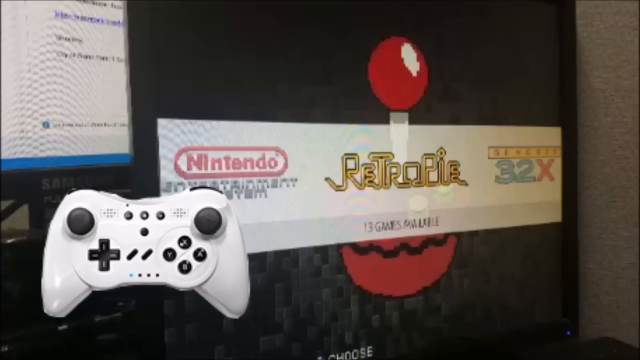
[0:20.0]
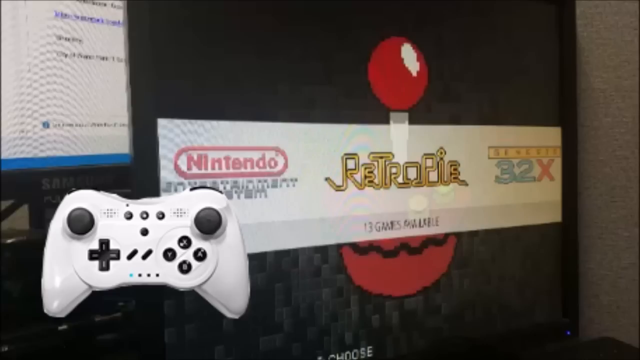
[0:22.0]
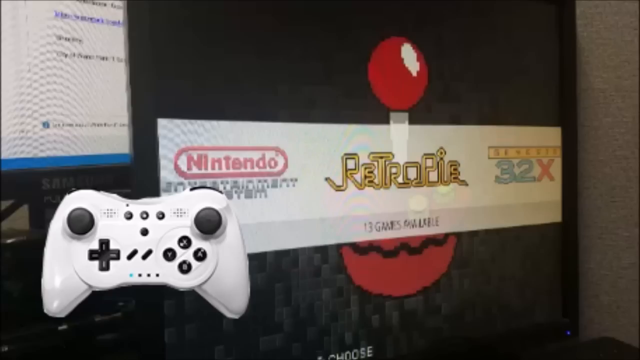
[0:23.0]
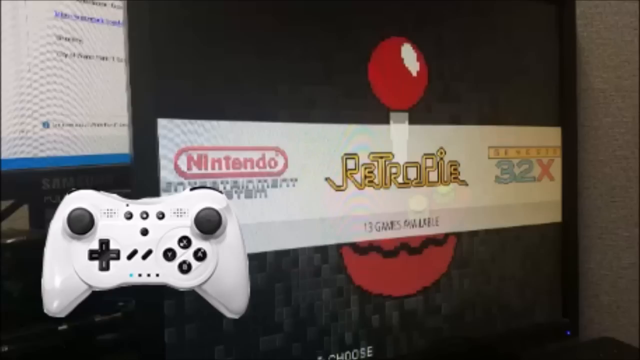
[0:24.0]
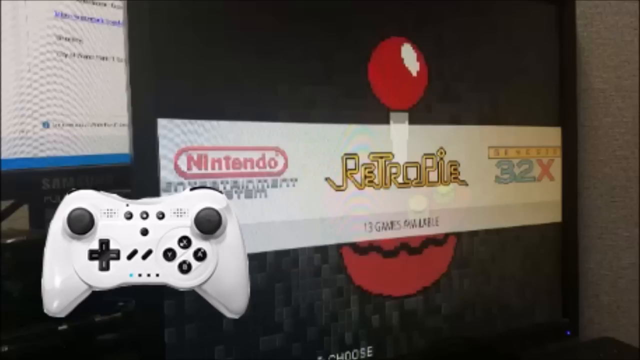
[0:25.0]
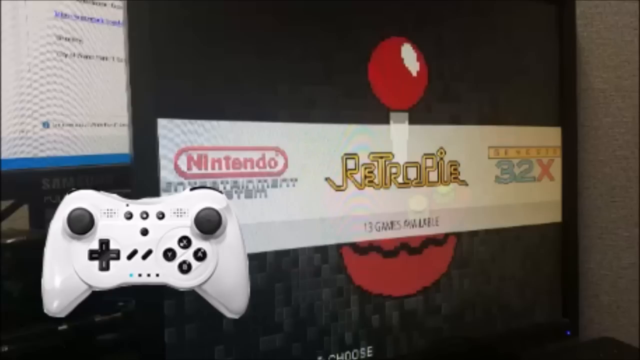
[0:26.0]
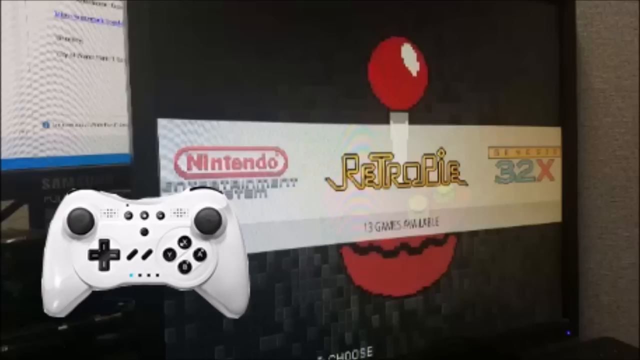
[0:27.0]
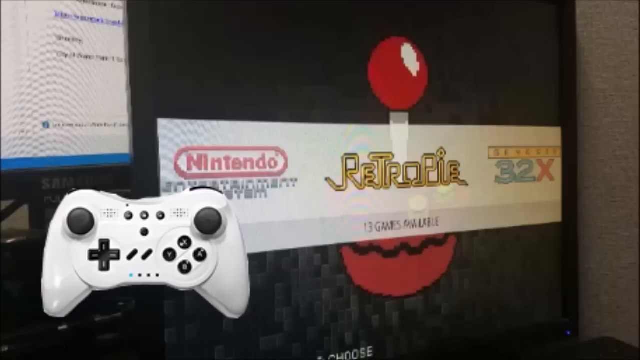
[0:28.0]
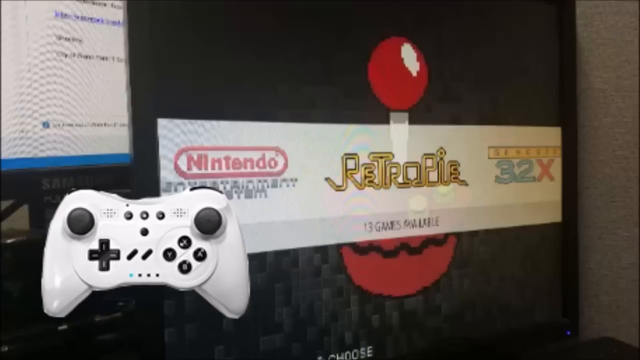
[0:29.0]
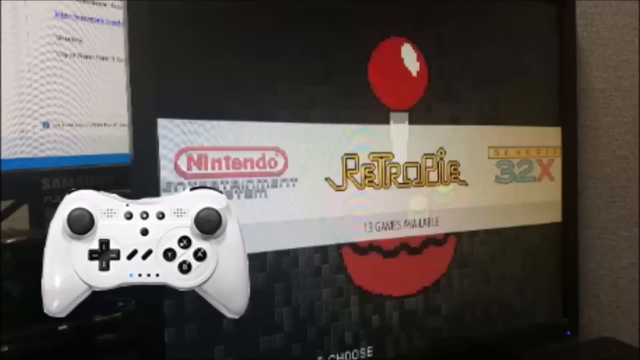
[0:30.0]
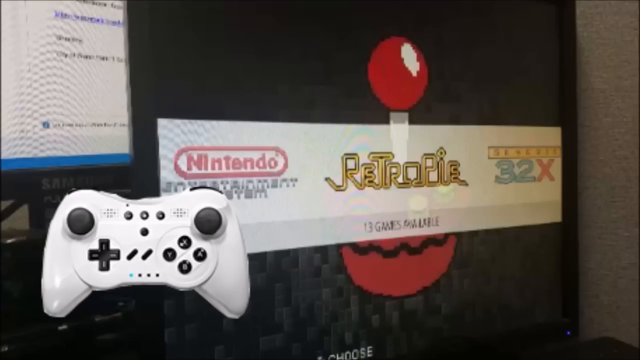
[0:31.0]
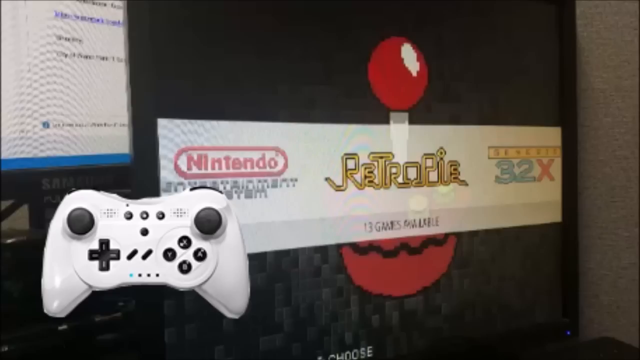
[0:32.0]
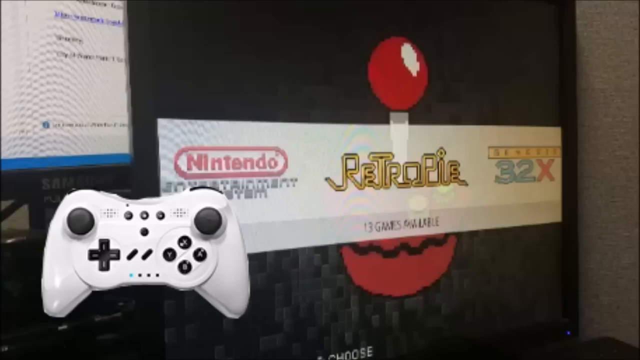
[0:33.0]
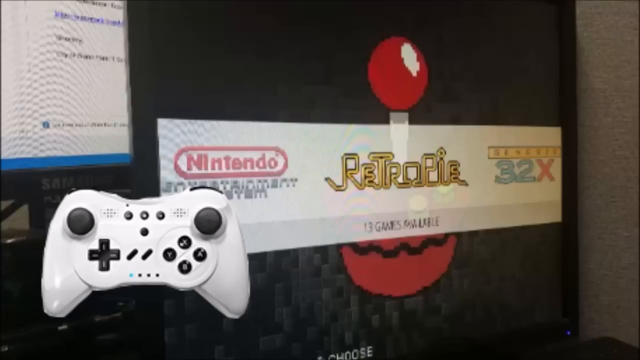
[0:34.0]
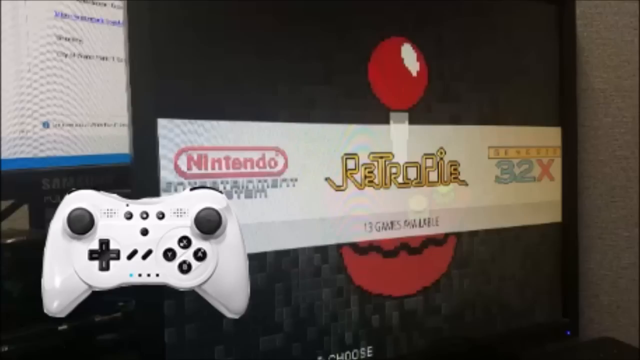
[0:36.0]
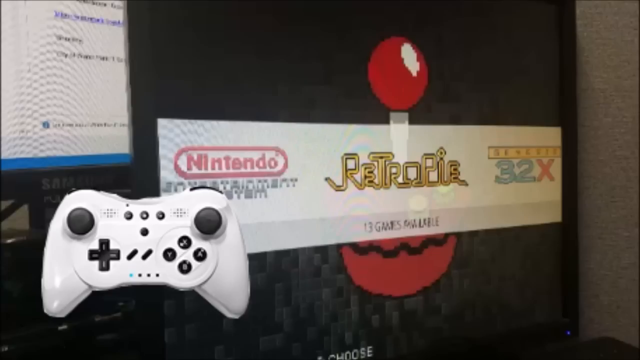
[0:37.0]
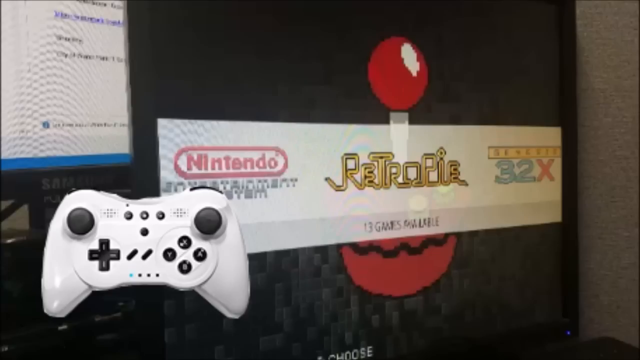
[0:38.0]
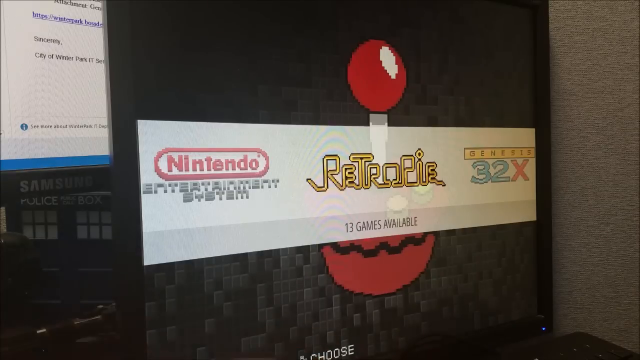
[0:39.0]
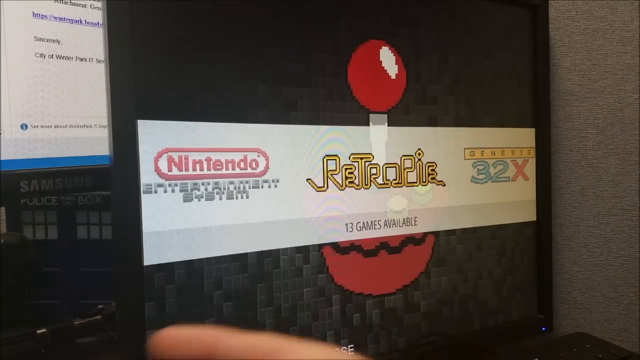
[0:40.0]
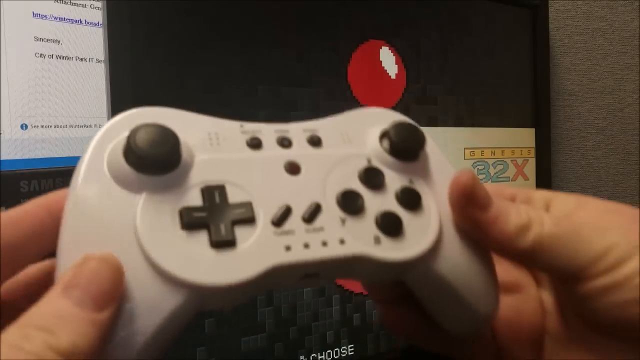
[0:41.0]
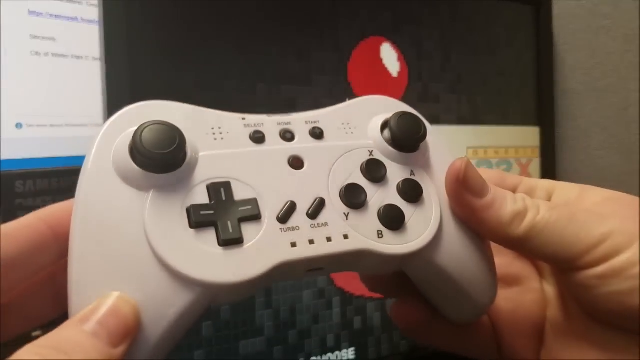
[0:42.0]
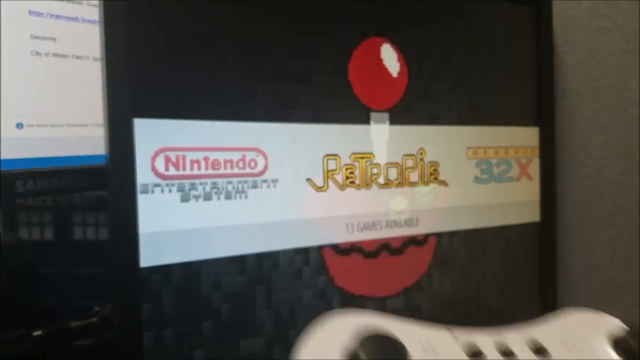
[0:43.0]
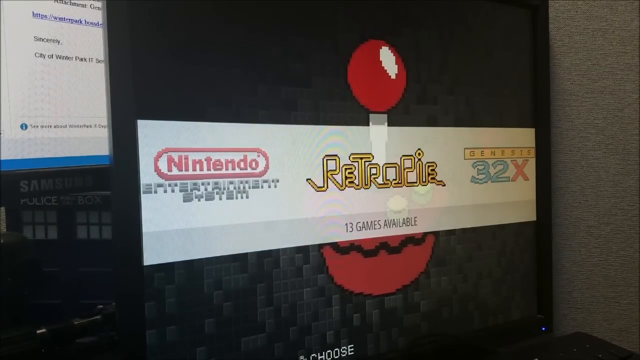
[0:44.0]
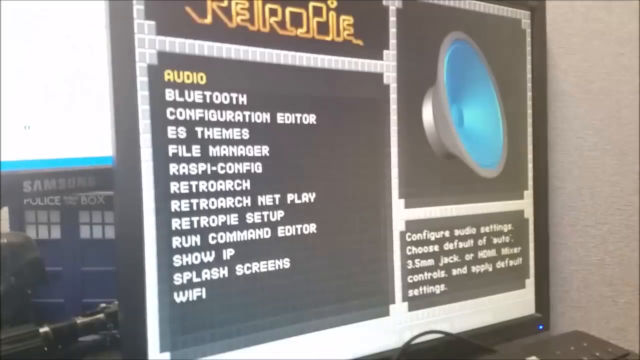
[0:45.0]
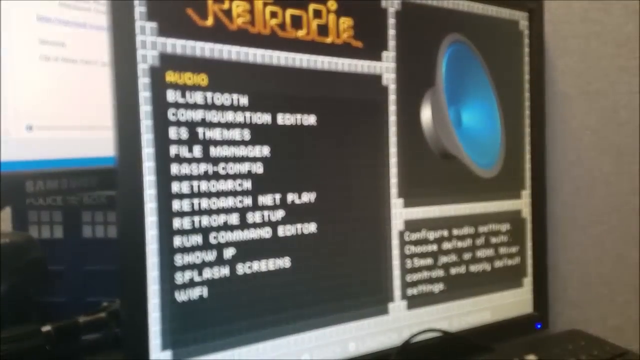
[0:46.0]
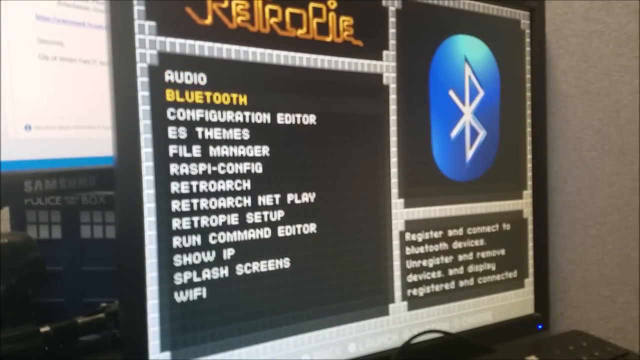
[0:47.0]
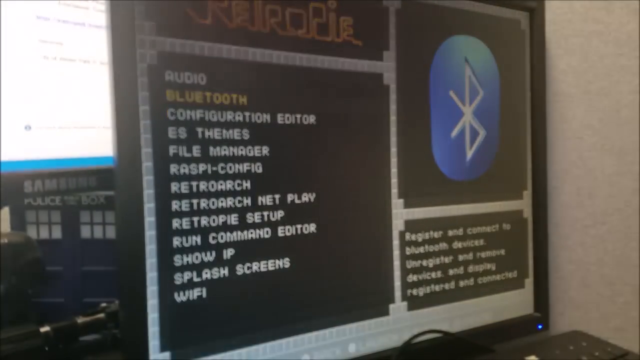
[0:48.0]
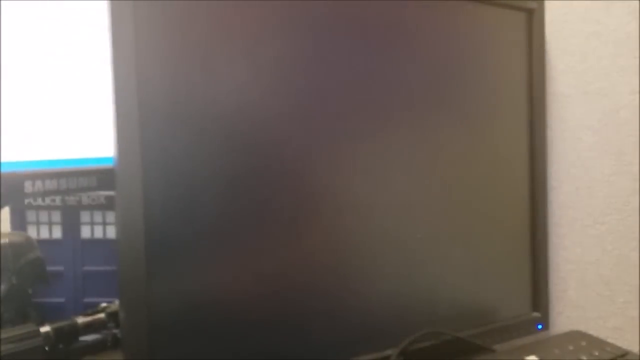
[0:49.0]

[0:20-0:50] A black Windows PC monitor with a black background shows a video game joystick in the middle. Over it is a banner with the RetroPie logo in the middle, and below that, in a shaded section, "13 games available". There is a Nintendo logo, and to the right of RetroPie is "32X". A white plastic handheld controller with black buttons is also in the image. The setting looks like a cubicle office space. In the upper left corner is another computer monitor, a Samsung, sitting atop what appears to be its hard drive; only a small corner of it is visible, and its screen shows a white page with a blue bottom banner and black and purple text. A person's hands enter the frame holding the same controller; it appears as though they grab it right out of thin air, since the one on the screen disappears once they grab it.